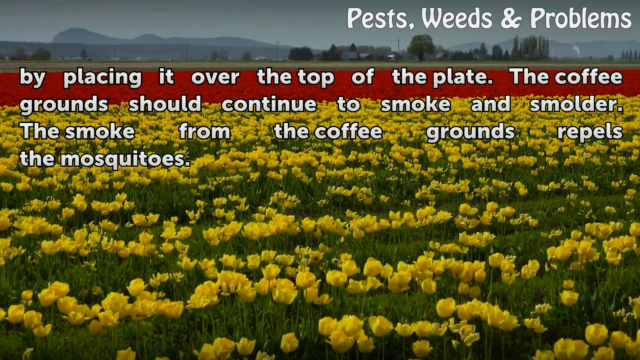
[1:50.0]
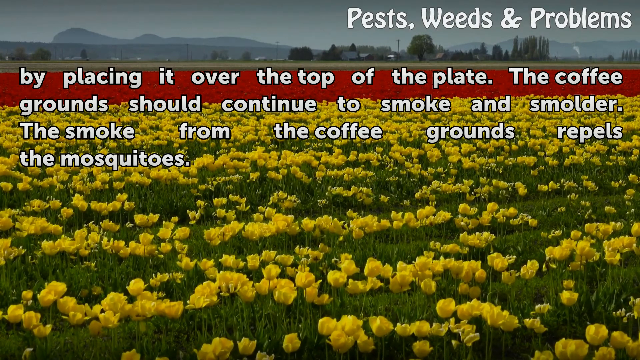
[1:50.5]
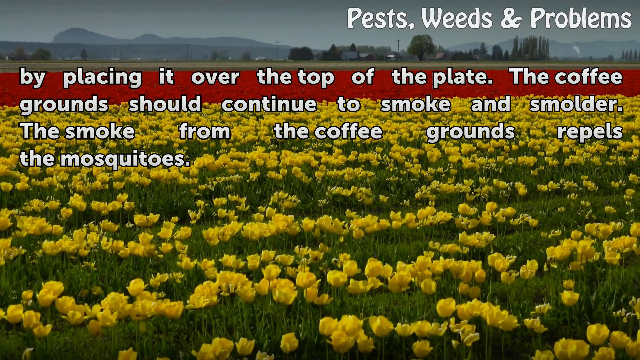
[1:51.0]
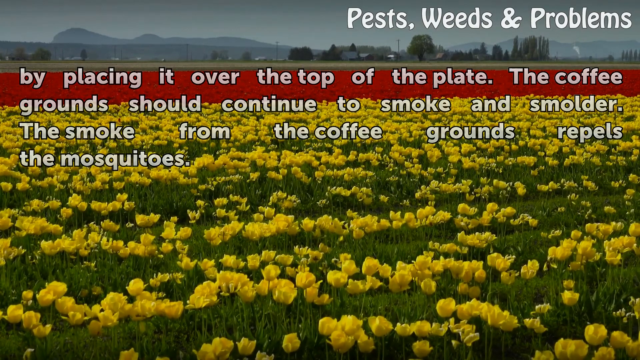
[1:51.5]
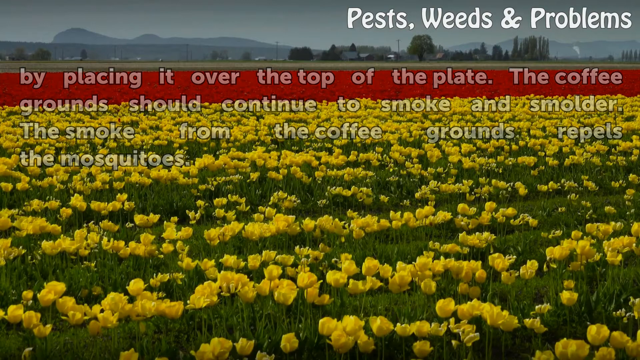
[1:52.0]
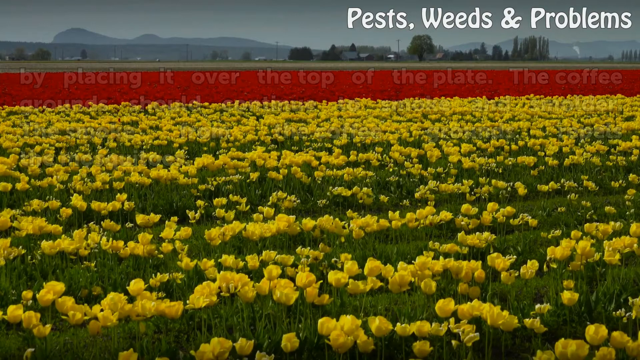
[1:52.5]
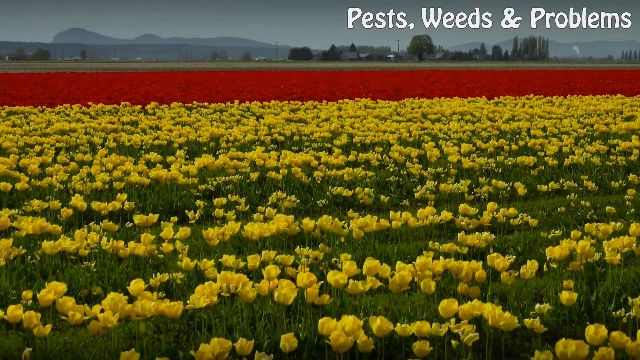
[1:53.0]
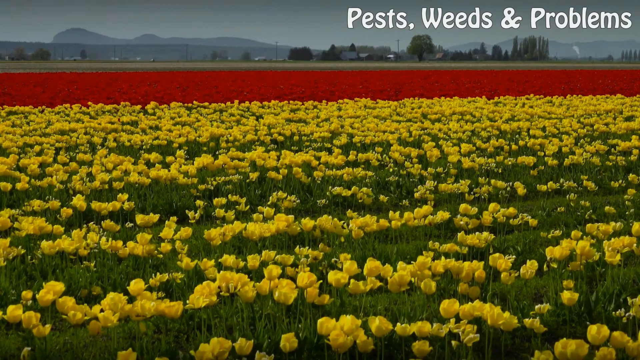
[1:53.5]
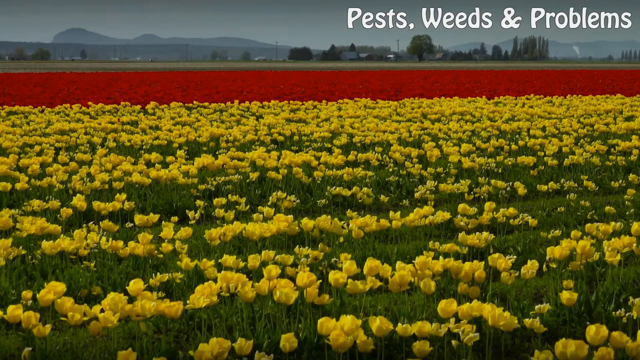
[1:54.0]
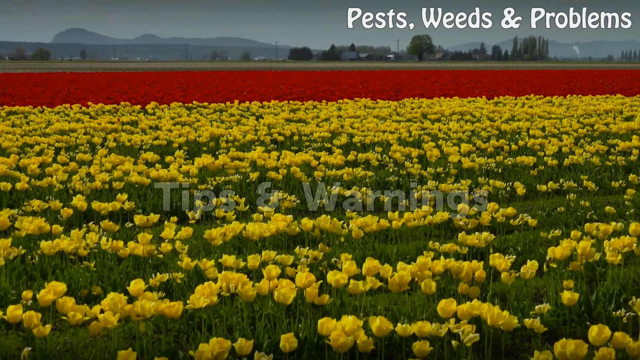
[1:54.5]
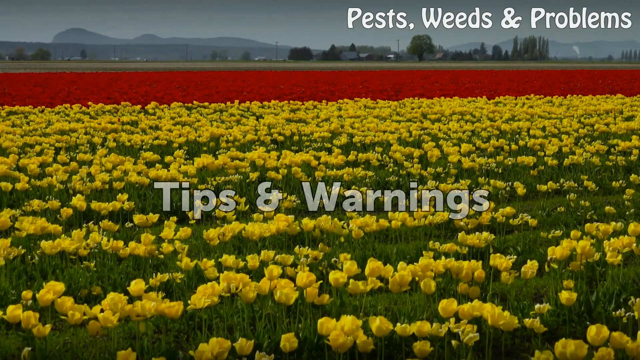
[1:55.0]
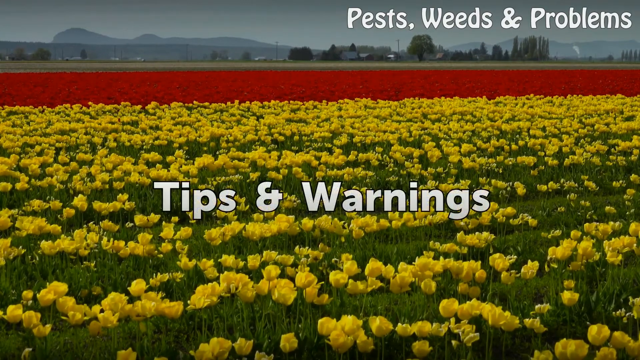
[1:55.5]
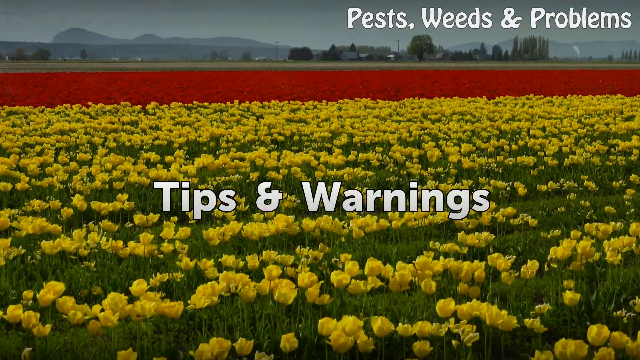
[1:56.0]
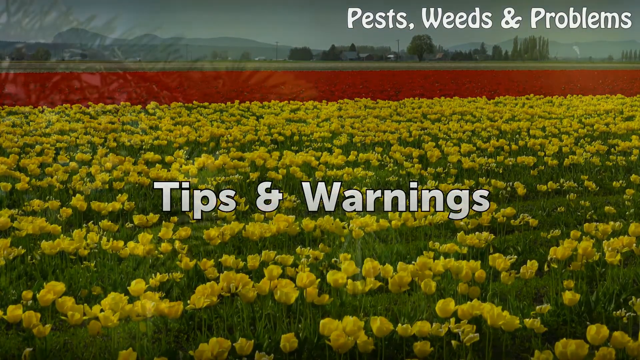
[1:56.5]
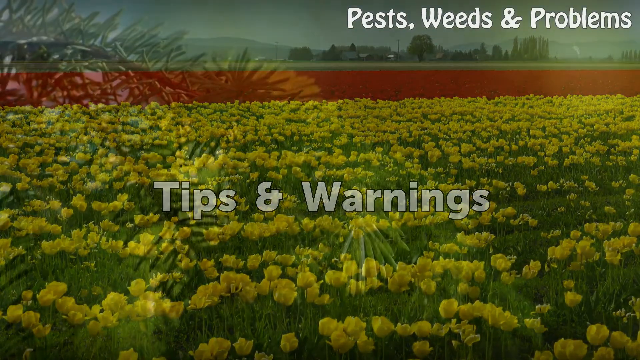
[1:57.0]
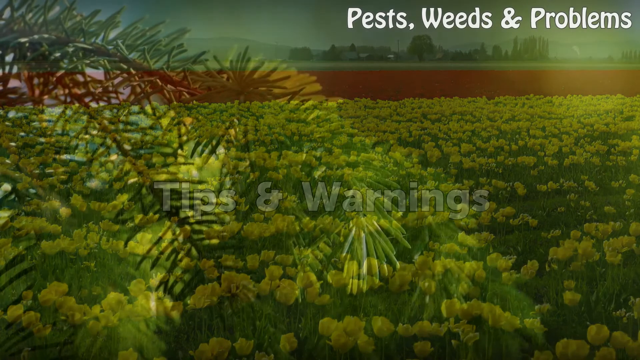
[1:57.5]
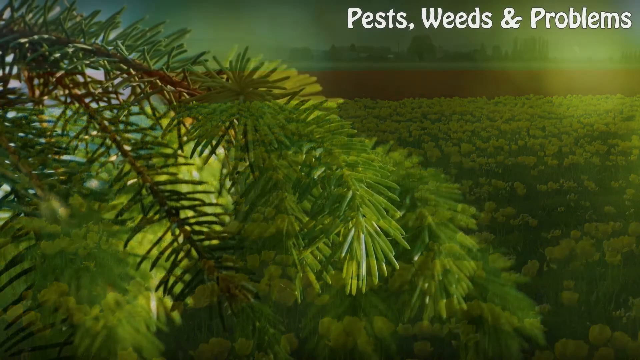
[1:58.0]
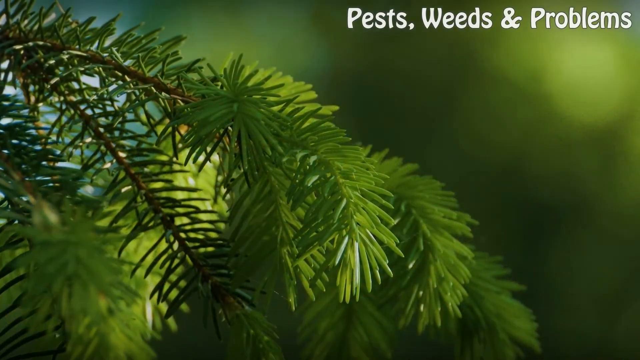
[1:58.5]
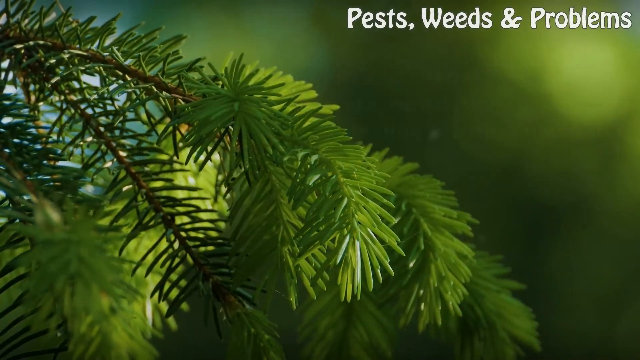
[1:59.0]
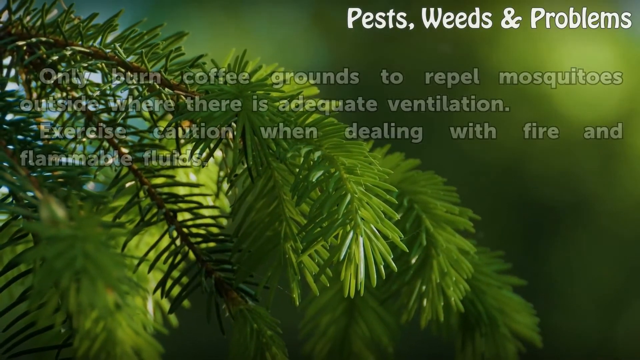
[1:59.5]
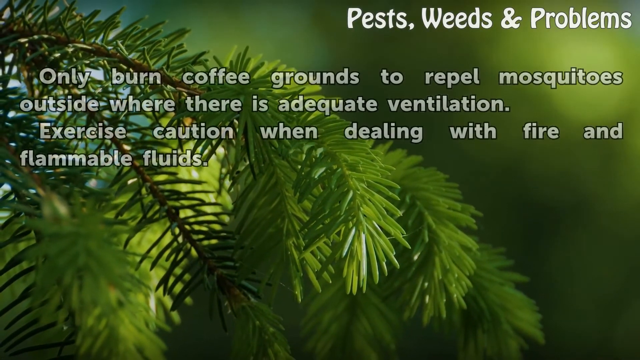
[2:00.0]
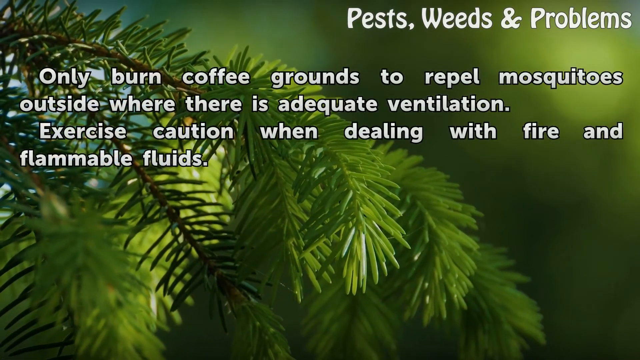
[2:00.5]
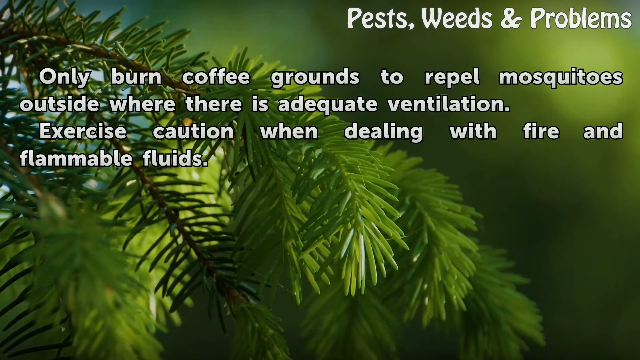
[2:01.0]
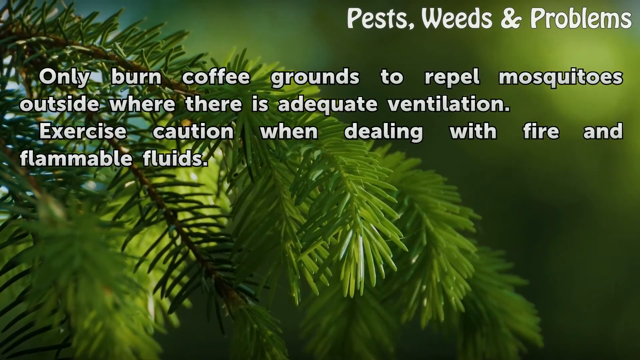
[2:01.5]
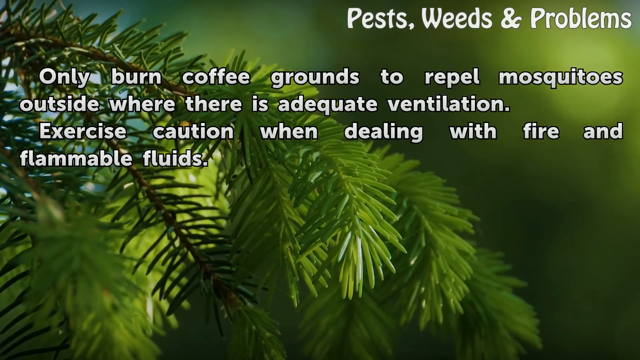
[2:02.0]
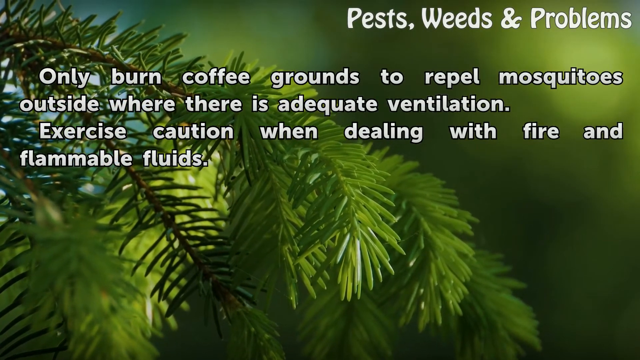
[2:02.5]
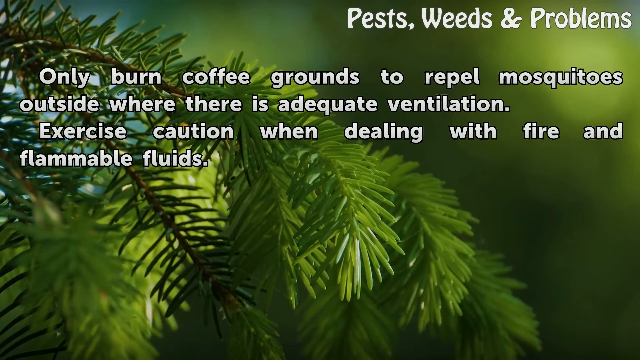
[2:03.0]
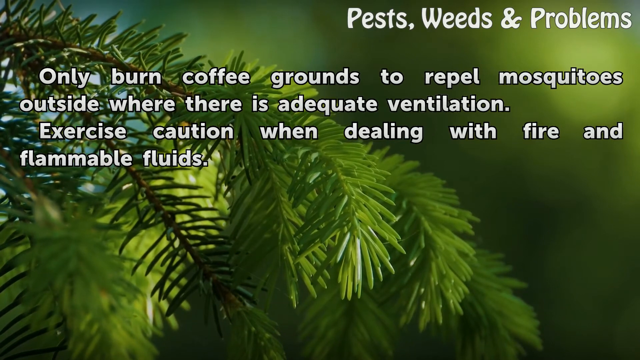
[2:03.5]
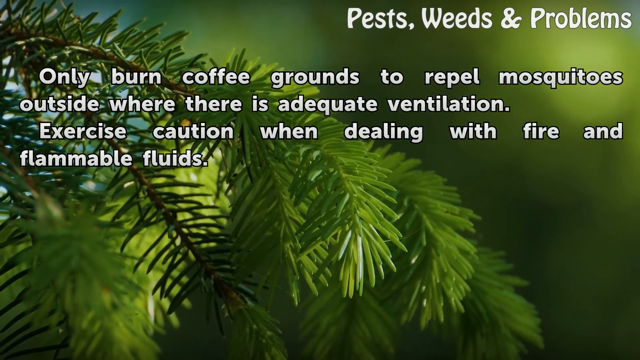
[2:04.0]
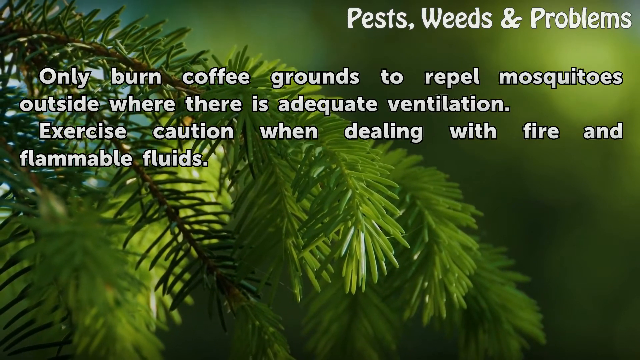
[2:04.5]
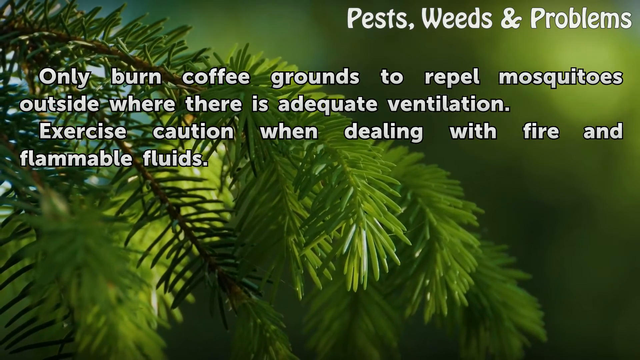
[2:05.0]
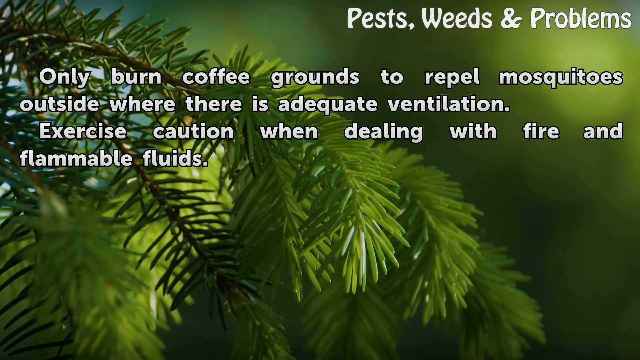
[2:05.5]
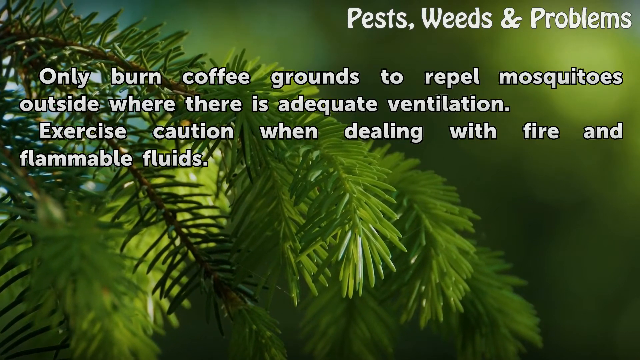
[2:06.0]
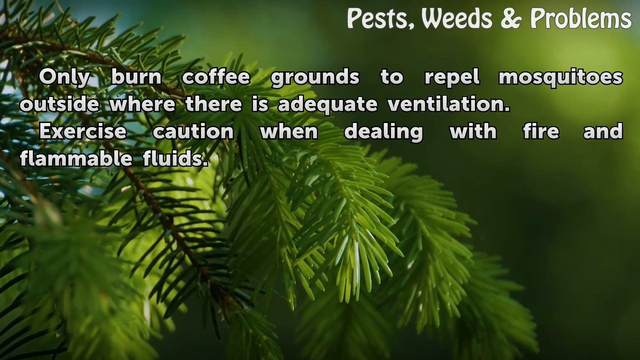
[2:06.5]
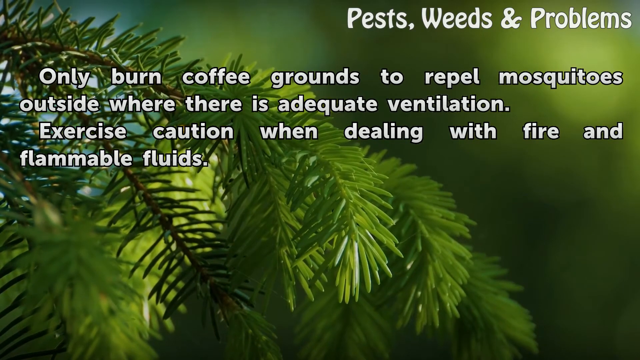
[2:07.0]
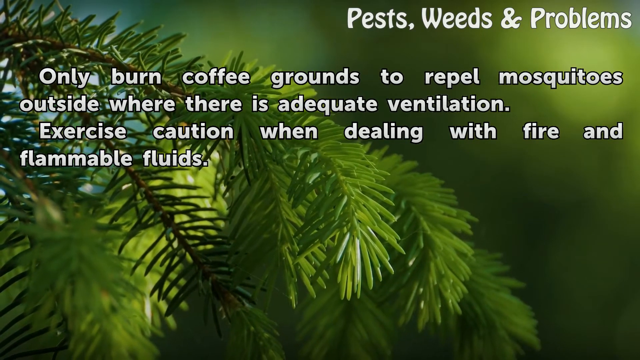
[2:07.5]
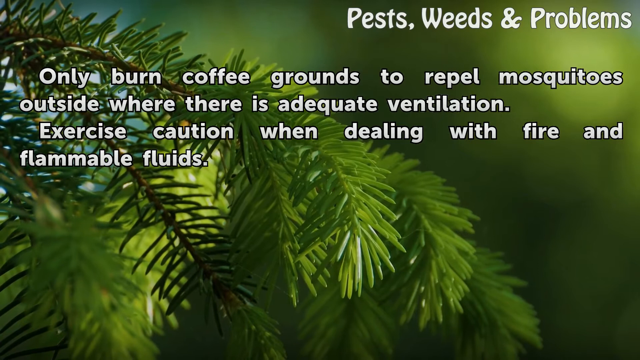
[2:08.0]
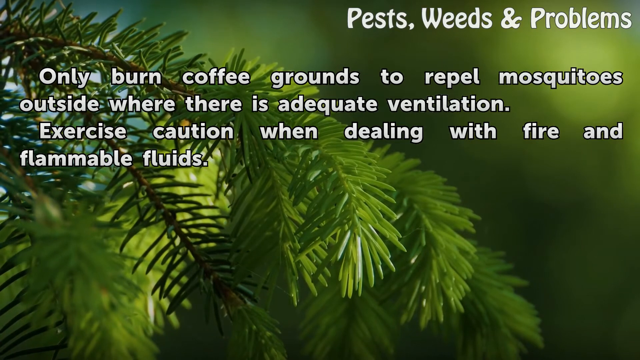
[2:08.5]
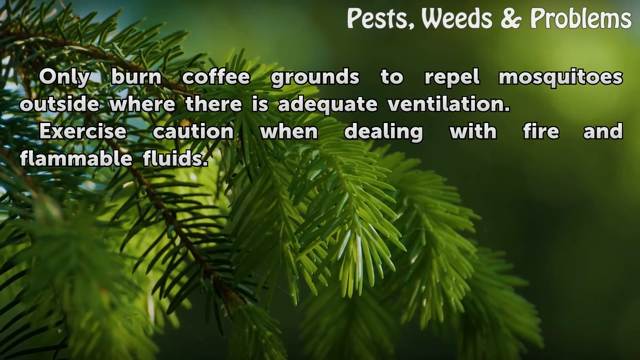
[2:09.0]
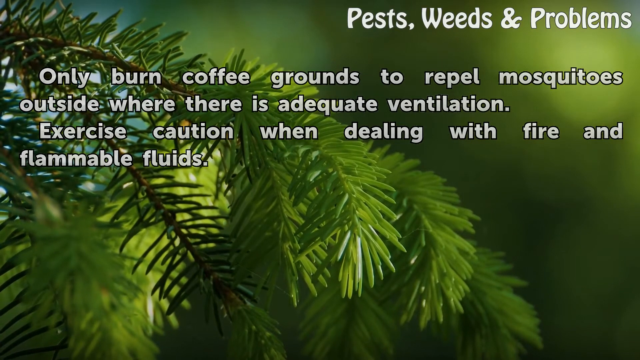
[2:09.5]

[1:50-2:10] White text on the screen reads "by placing it over the top of the plate," completing the instruction to smother the fire with a large damp towel. The text goes on: "the coffee grounds should continue to smoke and smolder. The smoke from the coffee grounds repels the mosquitoes," and then fades away. In the upper right-hand corner, the text "pests, weeds, and problems" remains, rendered in white letters in the hobo font with a thin black outline. Bigger text appears reading "tips and warnings," in a white sans serif font with a thin black outline. The text and photograph fade away, and what looks like some twigs in a pine tree appears, very close to the camera. White text reads "only burn coffee grounds to repel mosquitoes outside where there is adequate ventilation. Exercise caution when dealing with fire." Behind the pine twig is a blurry, faded green background.